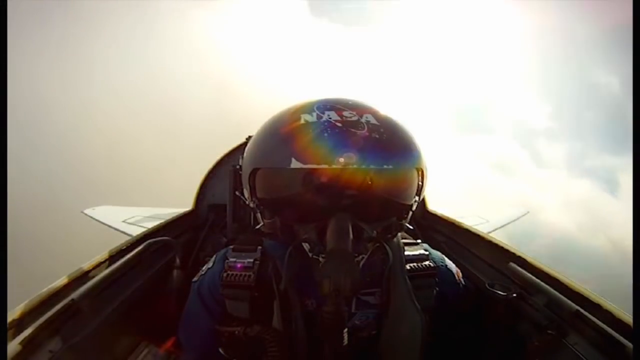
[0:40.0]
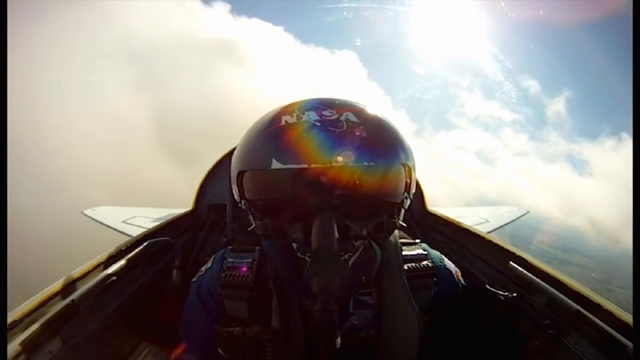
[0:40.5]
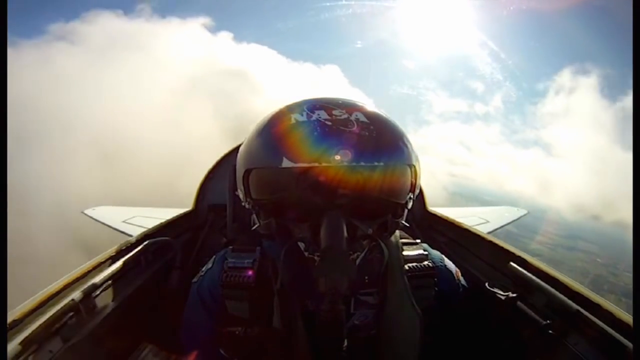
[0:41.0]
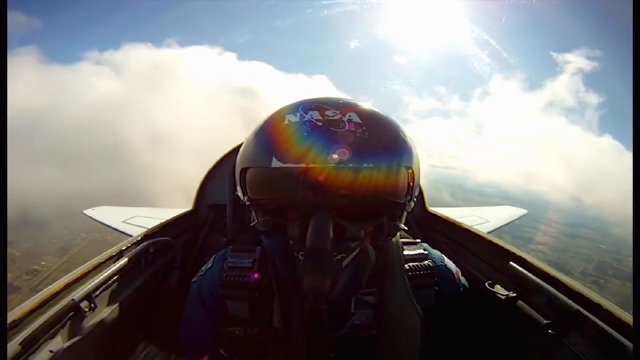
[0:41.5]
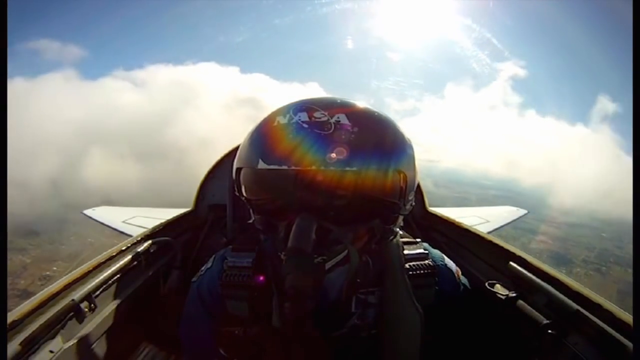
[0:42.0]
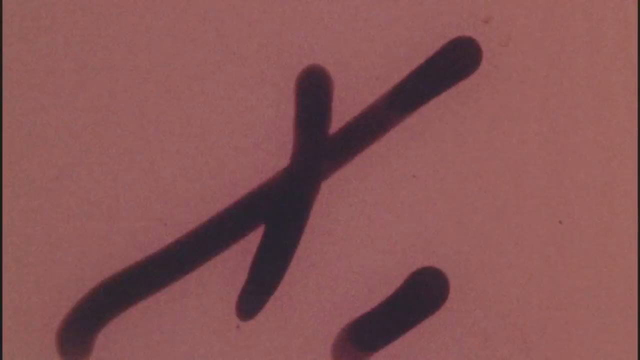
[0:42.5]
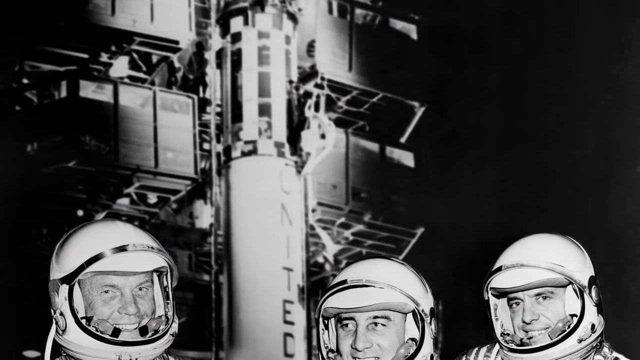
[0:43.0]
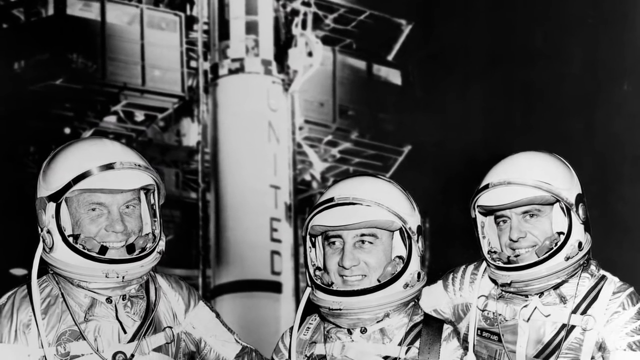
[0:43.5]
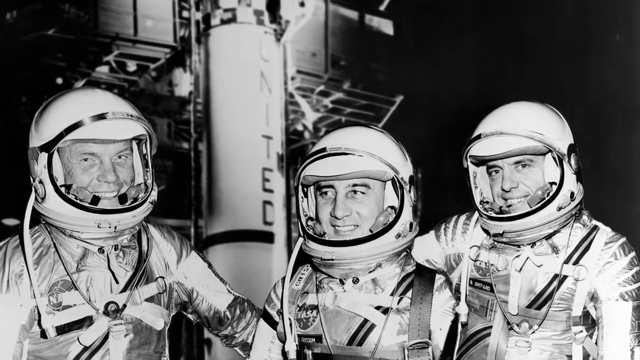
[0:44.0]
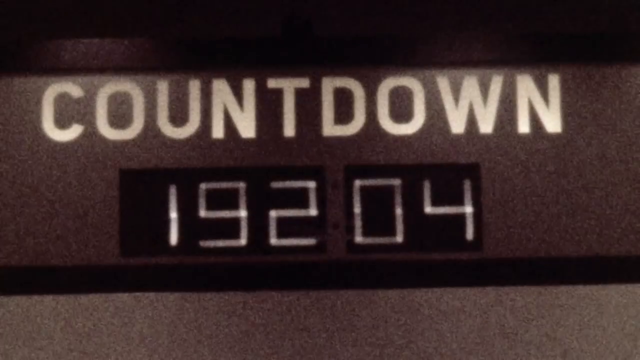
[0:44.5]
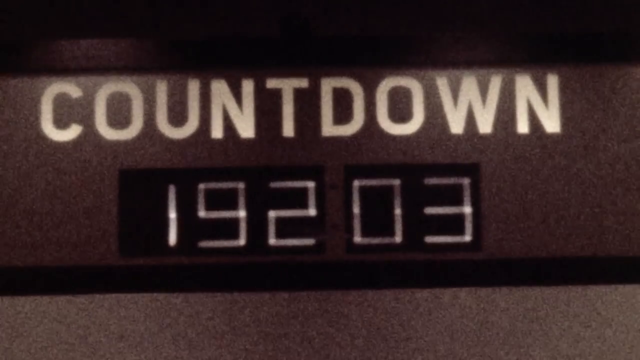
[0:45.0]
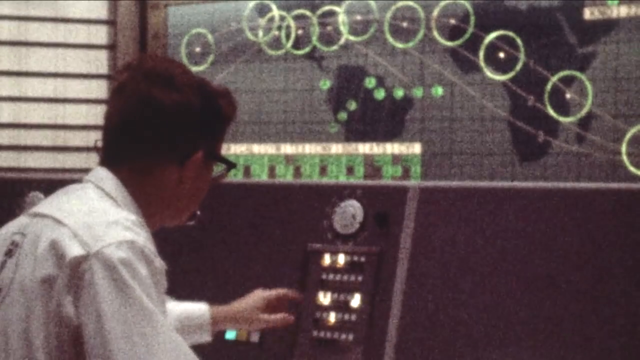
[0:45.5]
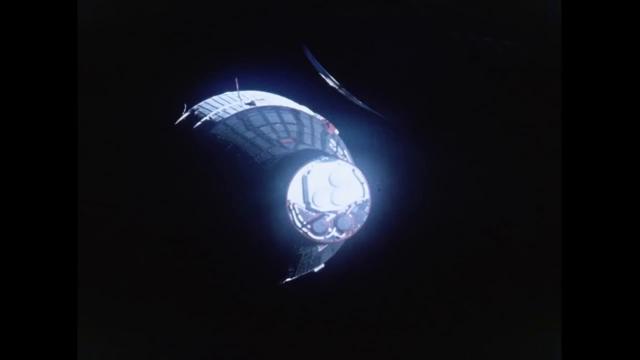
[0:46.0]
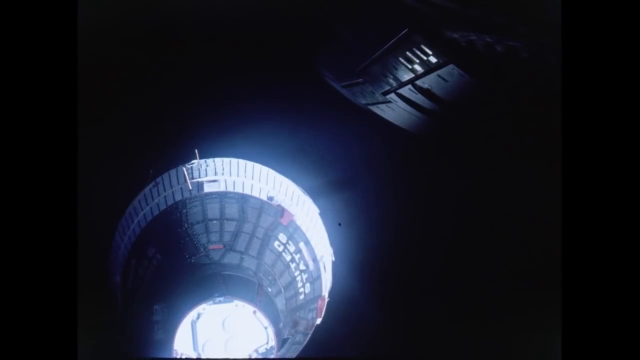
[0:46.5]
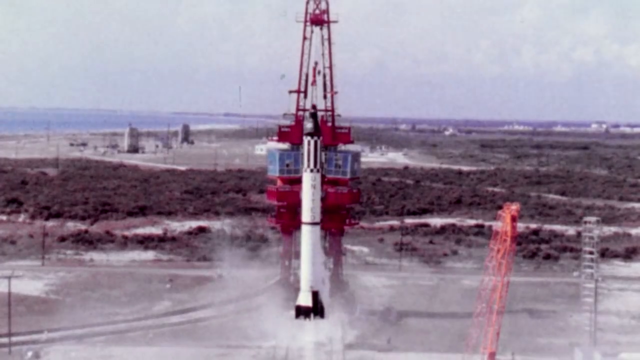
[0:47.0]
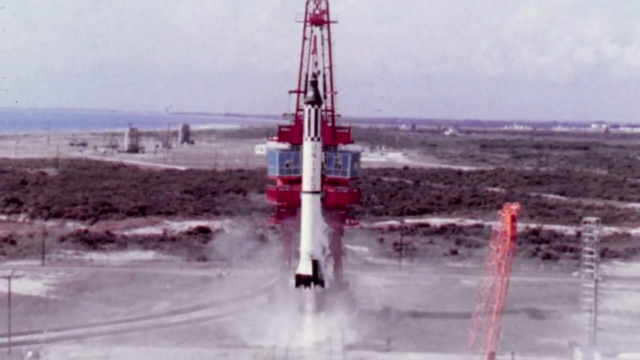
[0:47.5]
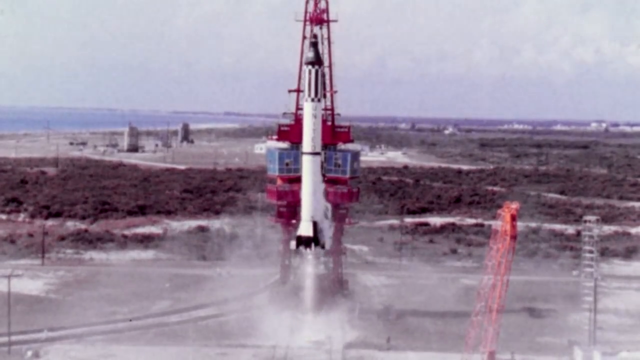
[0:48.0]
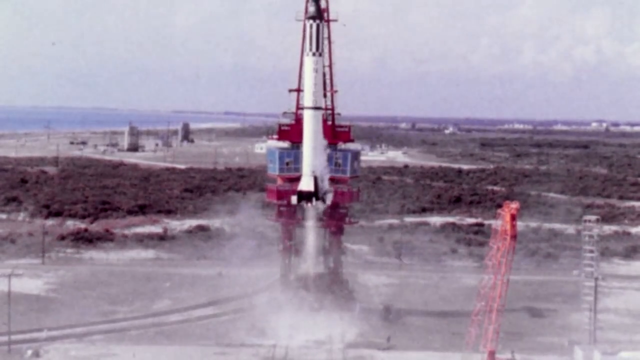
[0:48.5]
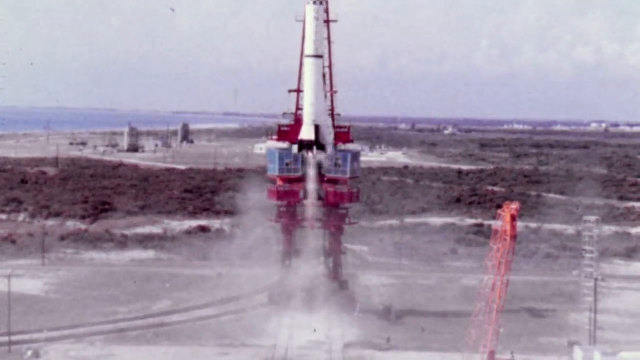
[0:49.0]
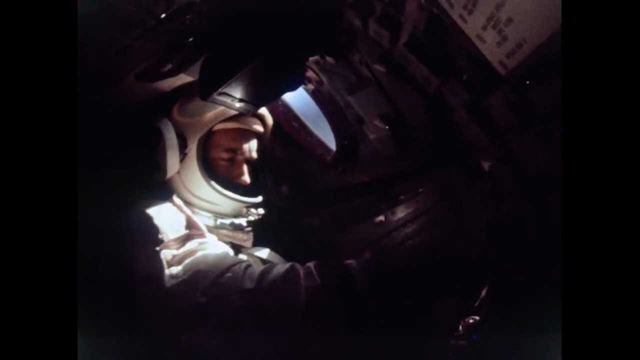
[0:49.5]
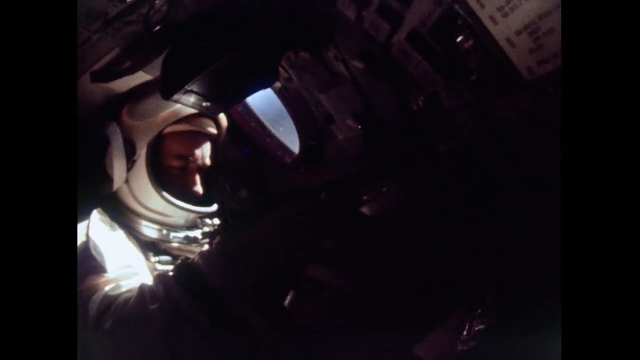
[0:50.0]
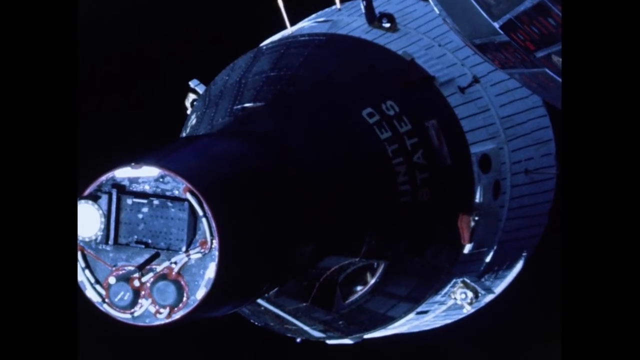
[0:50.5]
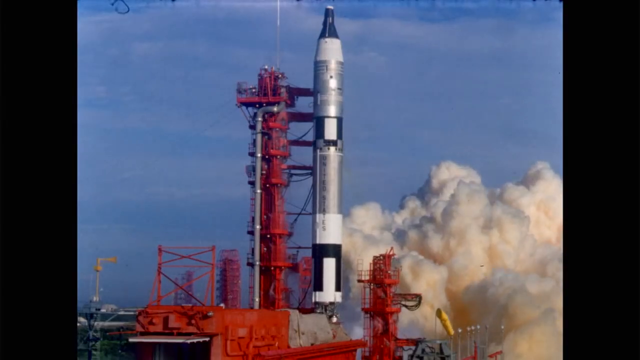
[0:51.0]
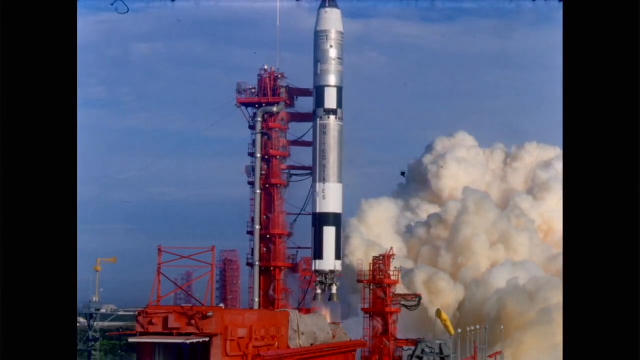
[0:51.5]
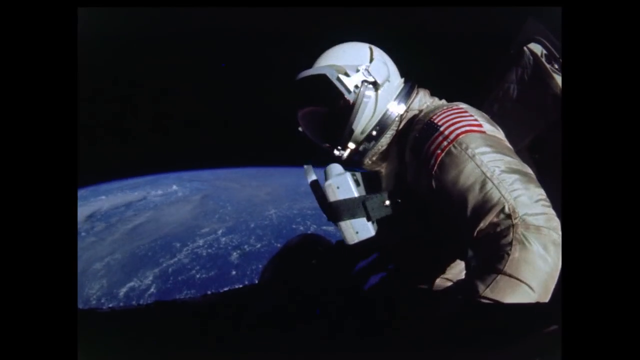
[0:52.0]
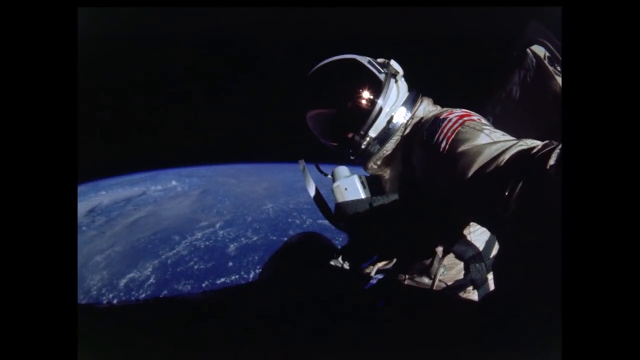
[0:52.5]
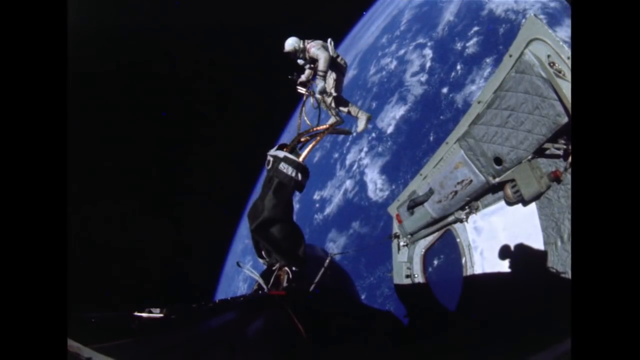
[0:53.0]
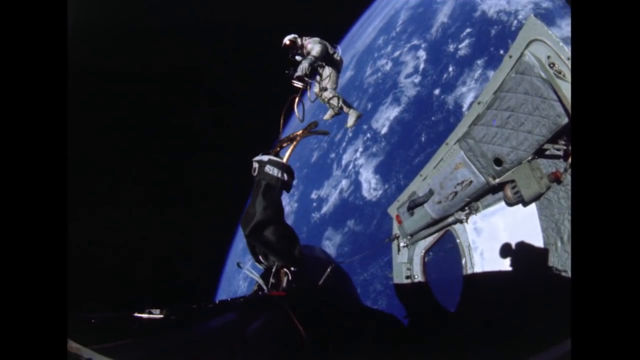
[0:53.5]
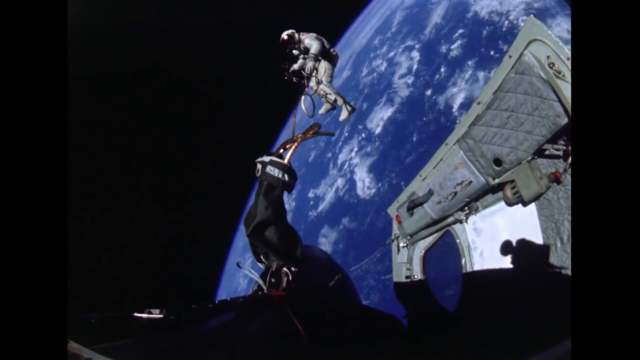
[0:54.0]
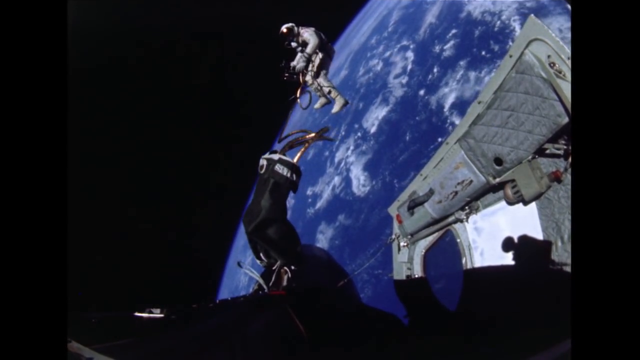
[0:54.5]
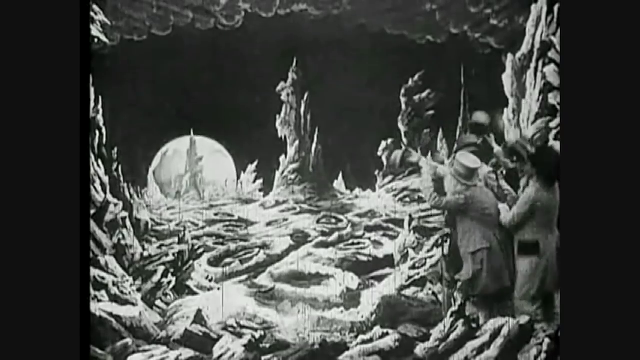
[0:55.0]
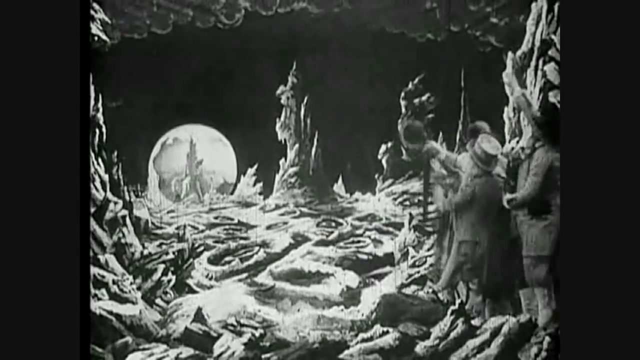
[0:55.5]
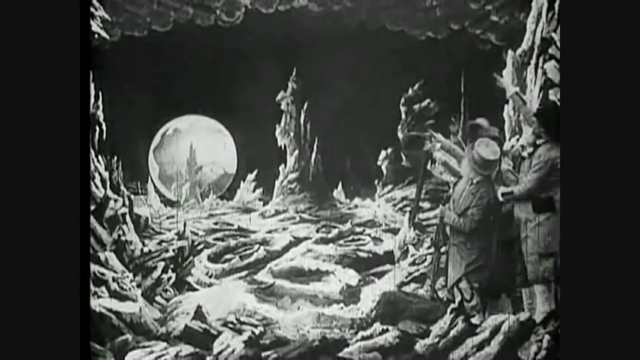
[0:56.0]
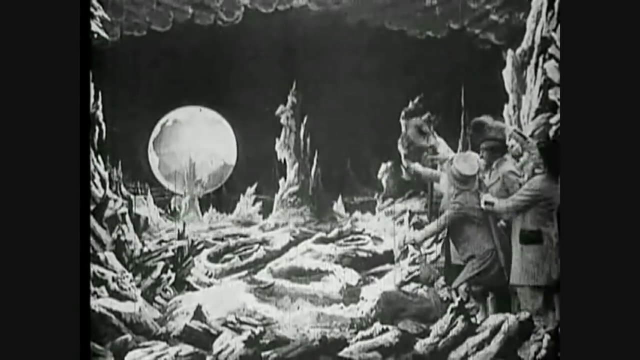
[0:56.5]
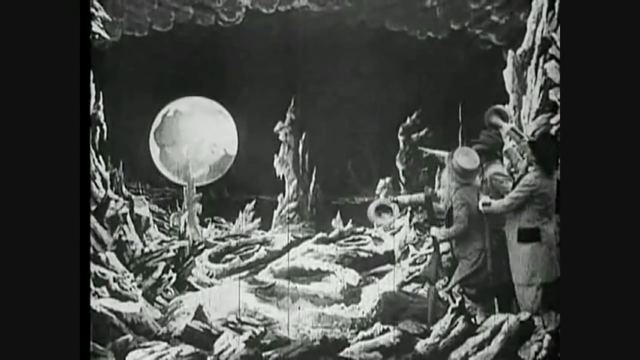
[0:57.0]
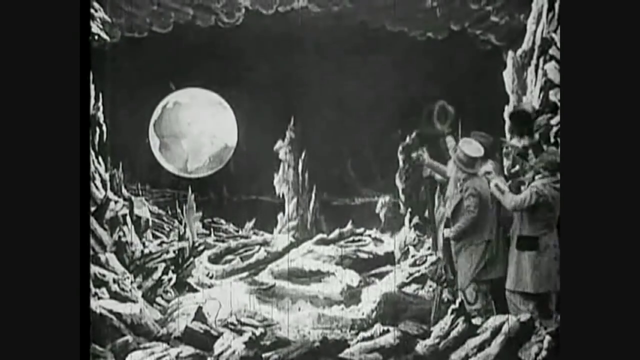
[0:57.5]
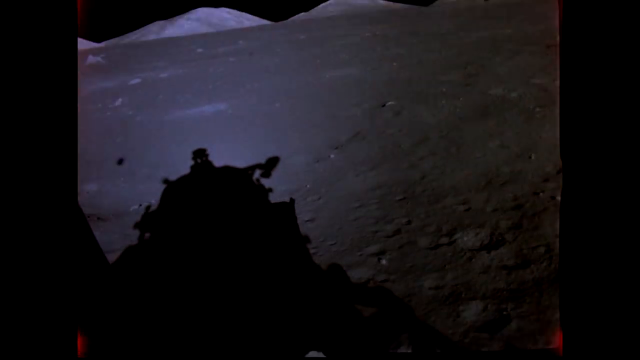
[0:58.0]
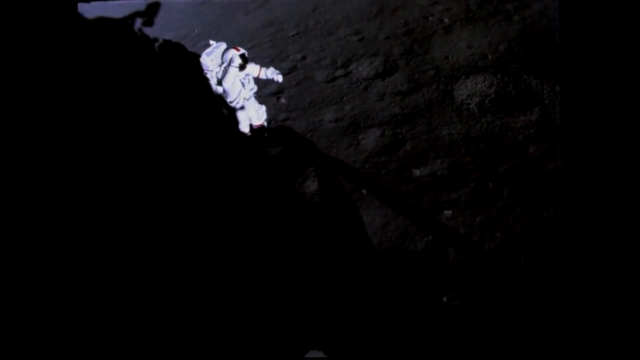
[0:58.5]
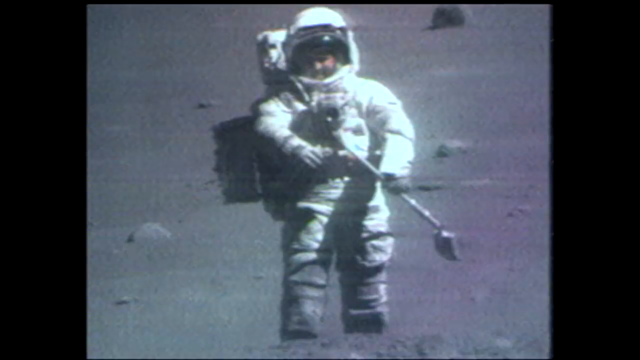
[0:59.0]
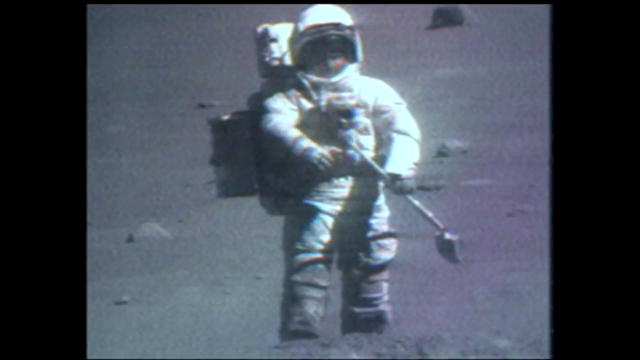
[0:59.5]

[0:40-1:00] A person wearing a helmet with the NASA logo, "NASA" in white, flies through the clouds, apparently a pilot. The video then goes to a black and white photo of three astronauts with their helmets on. Next, the word "countdown" appears in white with numbers such as 19, 2, 0, 3 counting down. Someone presses buttons inside, apparently at NASA waiting for blast off. A mostly white, white and black rocket goes up, followed by another rocket that has silver in it as well. Astronauts are shown outside a spaceship. Then comes a black and white movie of the Earth, and someone jumping around, apparently on the moon.